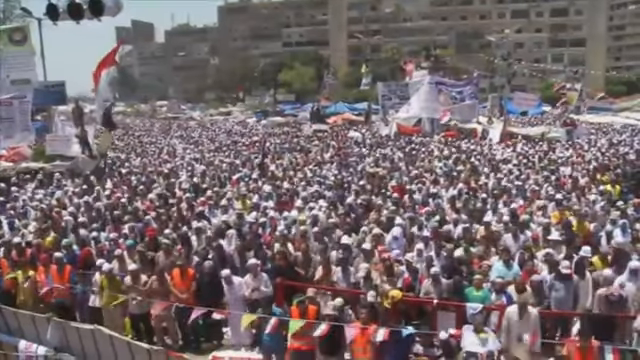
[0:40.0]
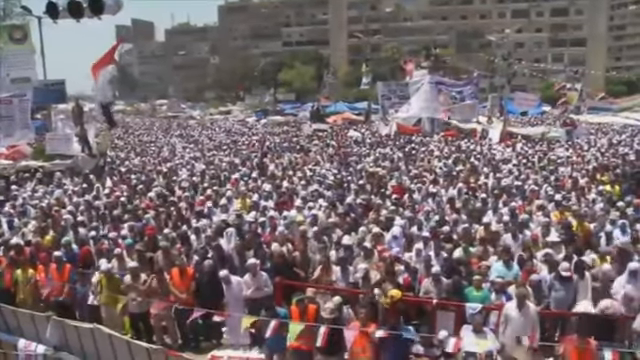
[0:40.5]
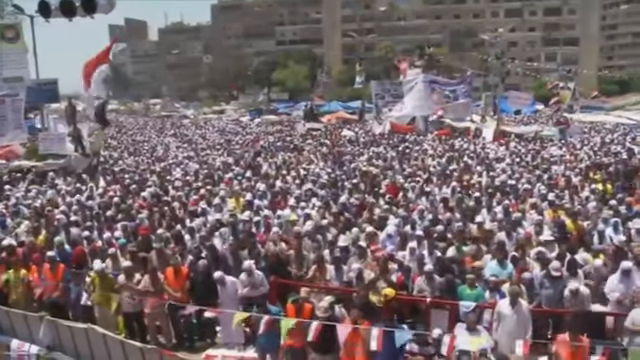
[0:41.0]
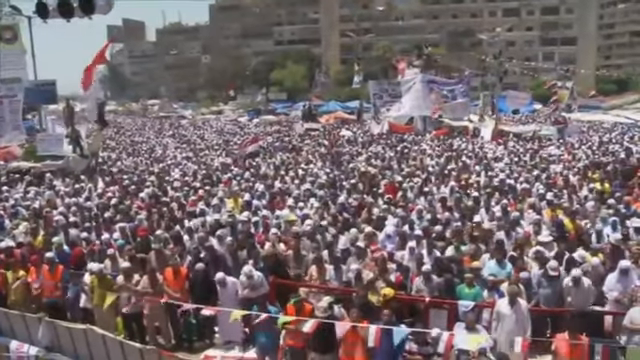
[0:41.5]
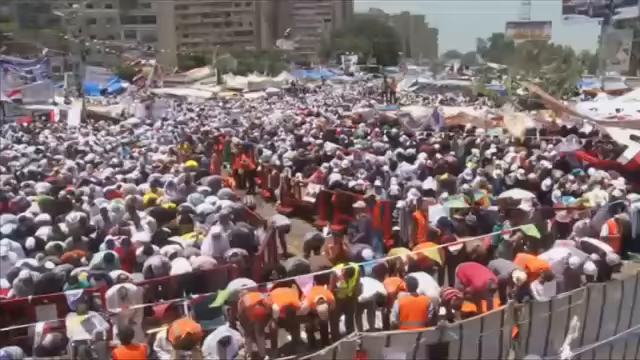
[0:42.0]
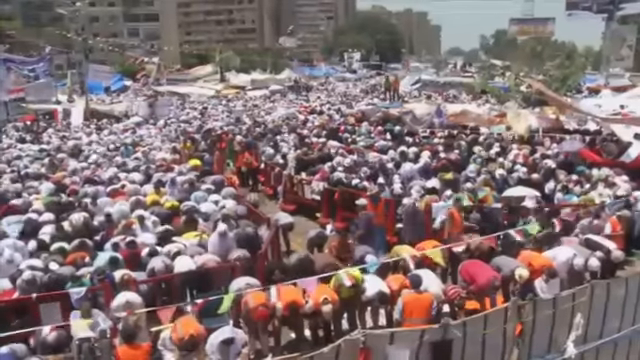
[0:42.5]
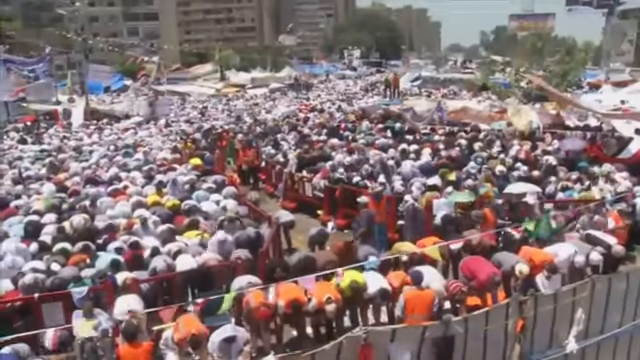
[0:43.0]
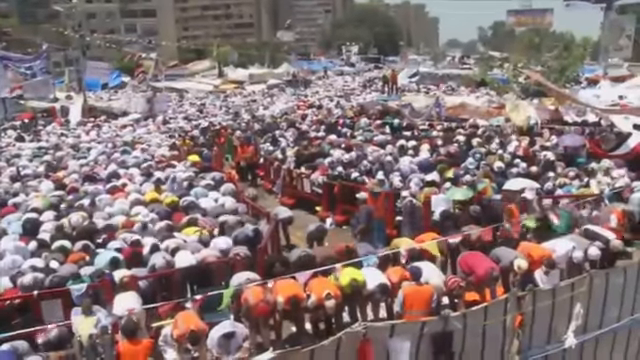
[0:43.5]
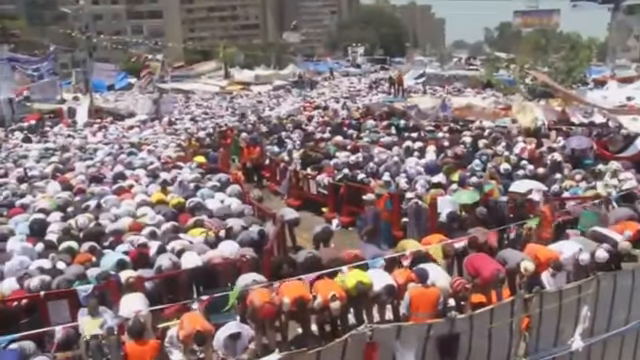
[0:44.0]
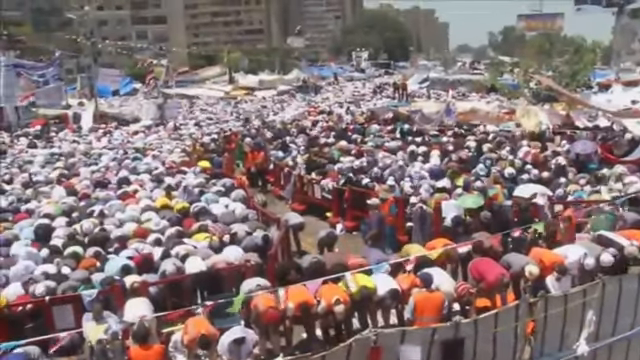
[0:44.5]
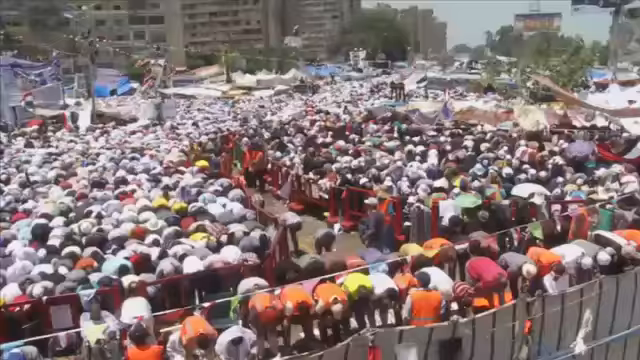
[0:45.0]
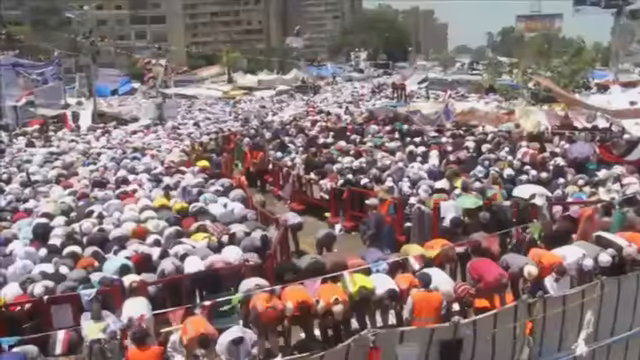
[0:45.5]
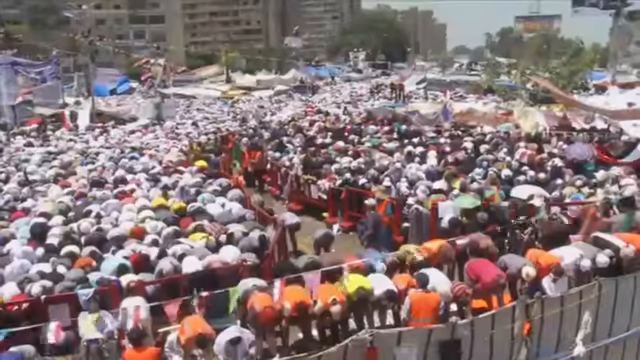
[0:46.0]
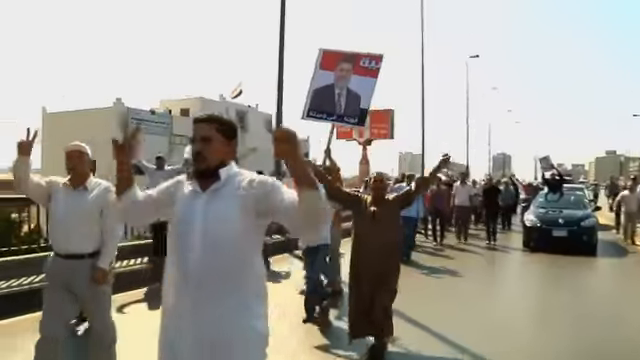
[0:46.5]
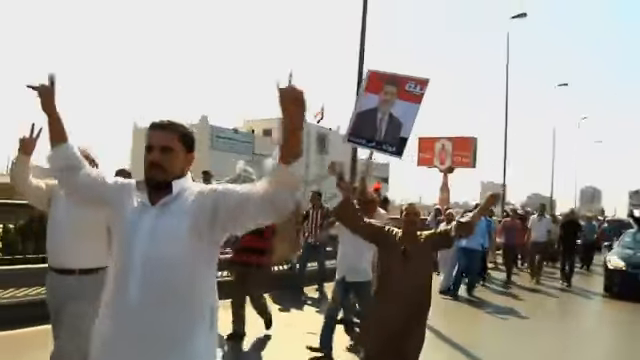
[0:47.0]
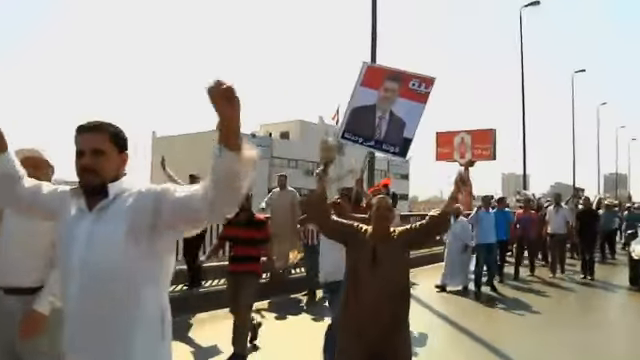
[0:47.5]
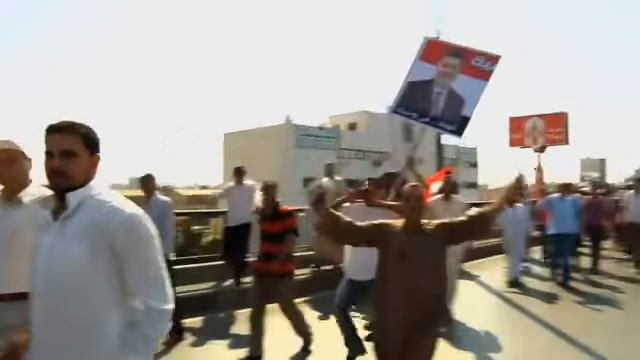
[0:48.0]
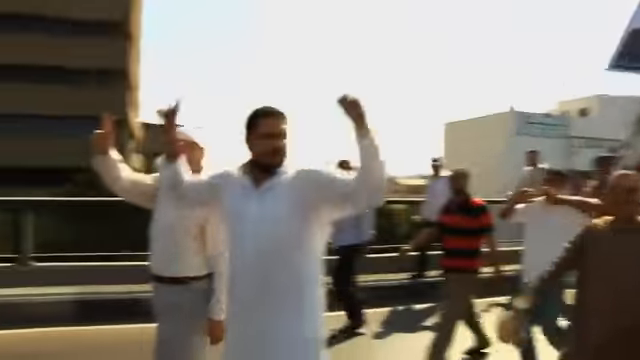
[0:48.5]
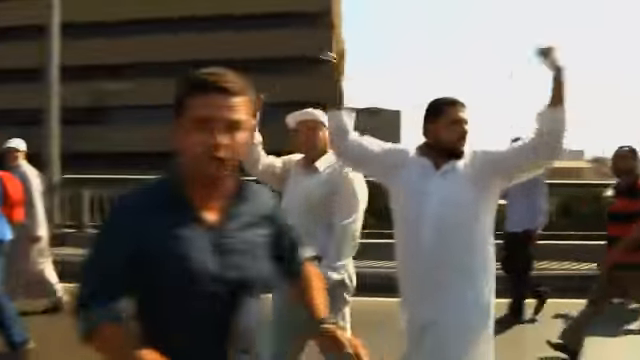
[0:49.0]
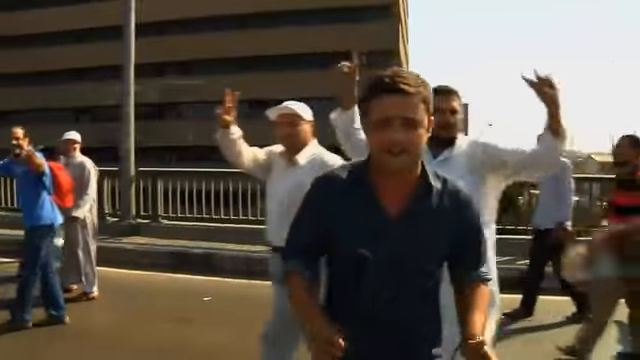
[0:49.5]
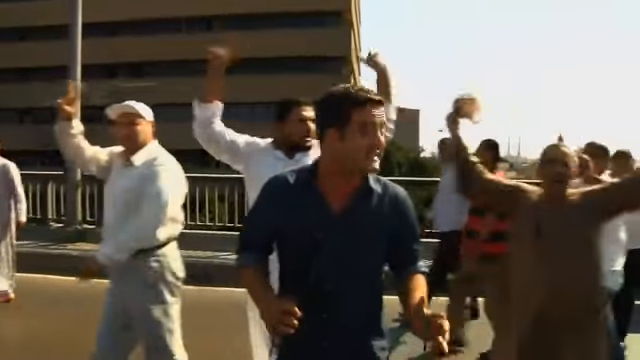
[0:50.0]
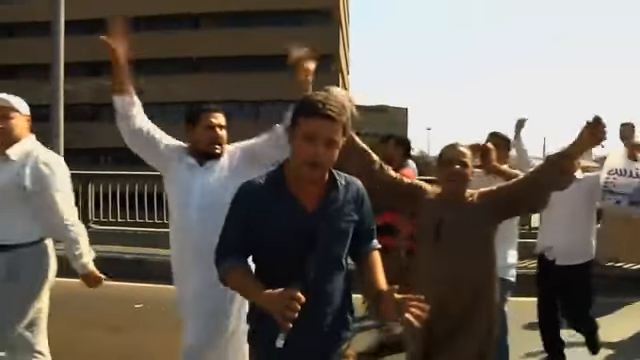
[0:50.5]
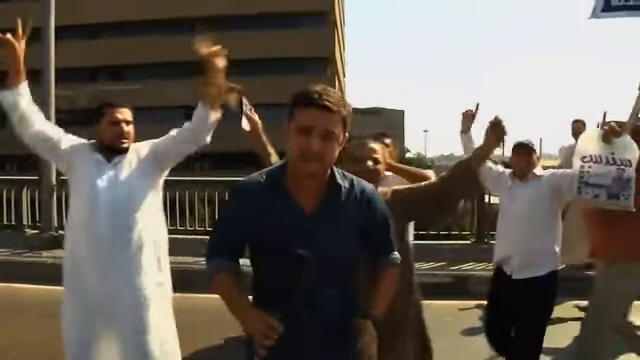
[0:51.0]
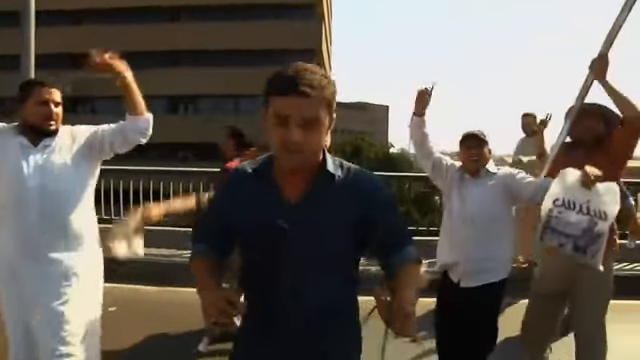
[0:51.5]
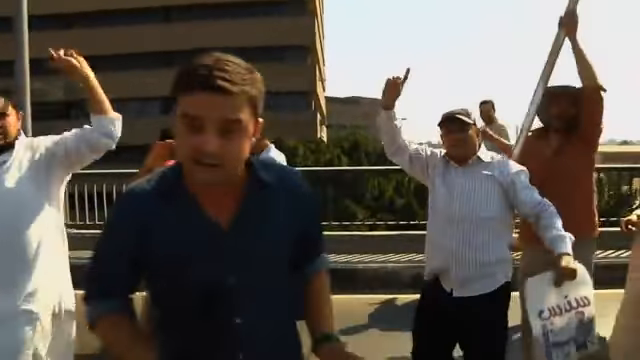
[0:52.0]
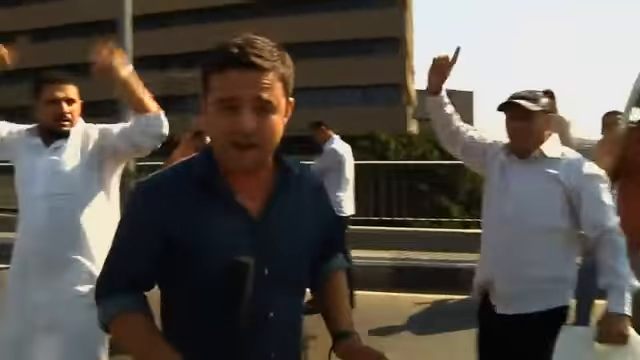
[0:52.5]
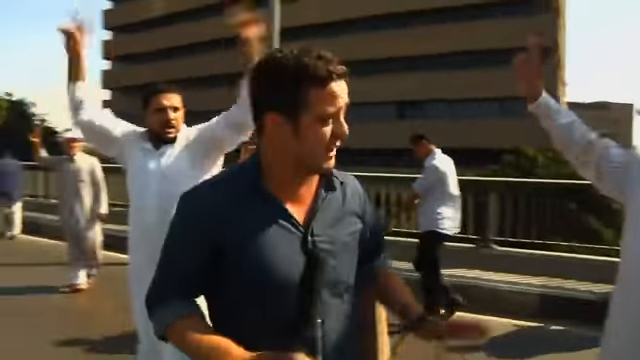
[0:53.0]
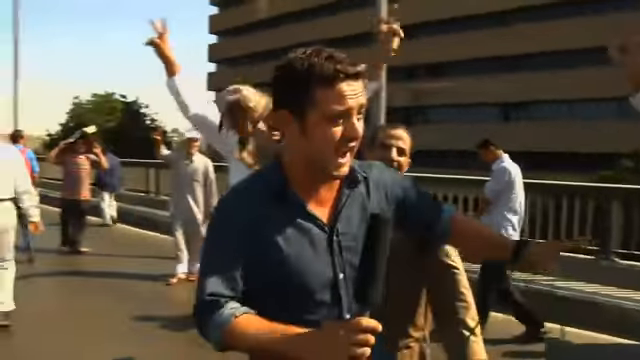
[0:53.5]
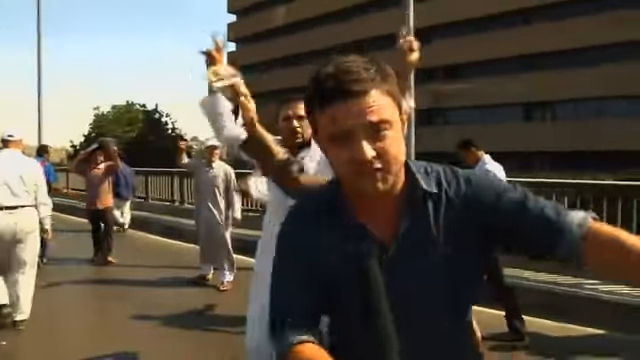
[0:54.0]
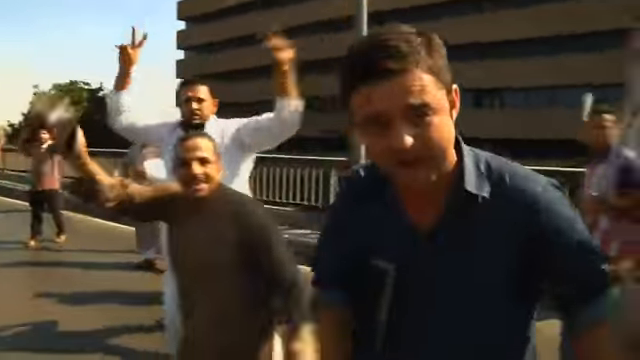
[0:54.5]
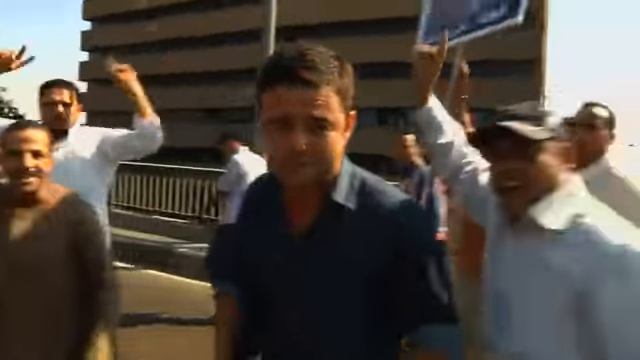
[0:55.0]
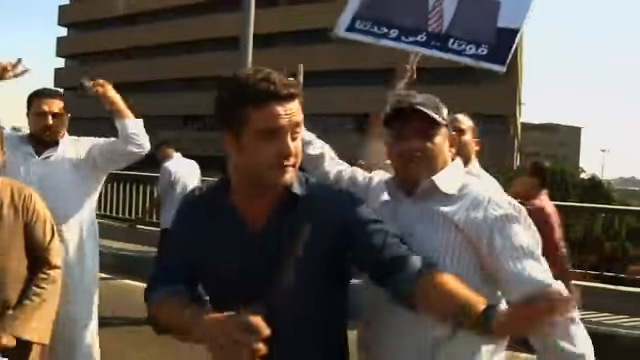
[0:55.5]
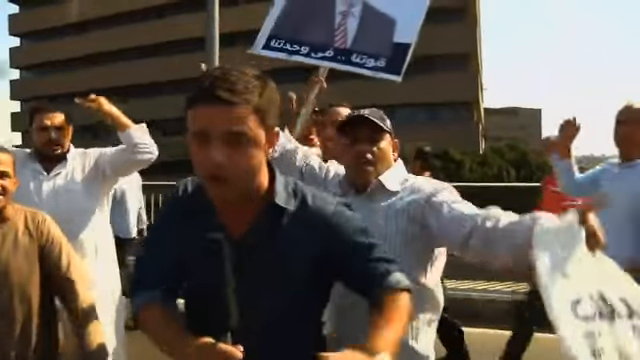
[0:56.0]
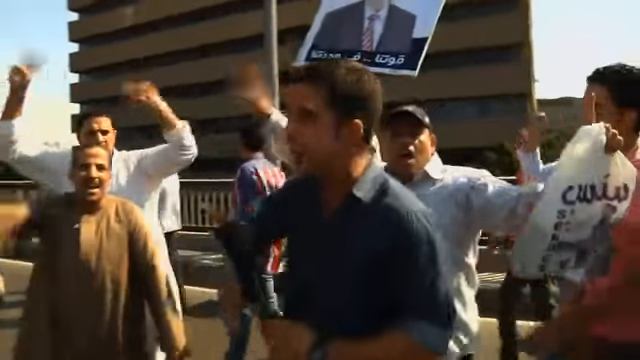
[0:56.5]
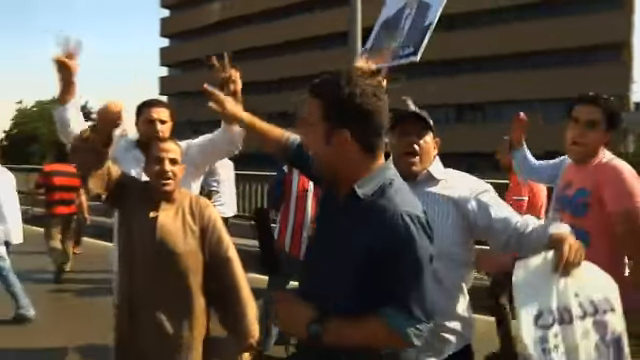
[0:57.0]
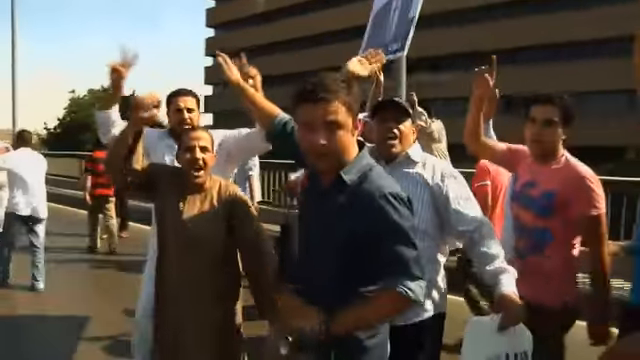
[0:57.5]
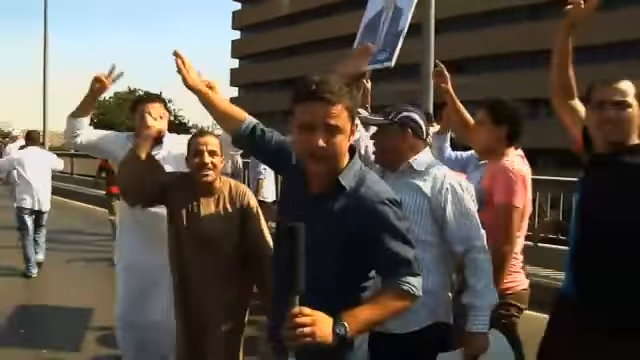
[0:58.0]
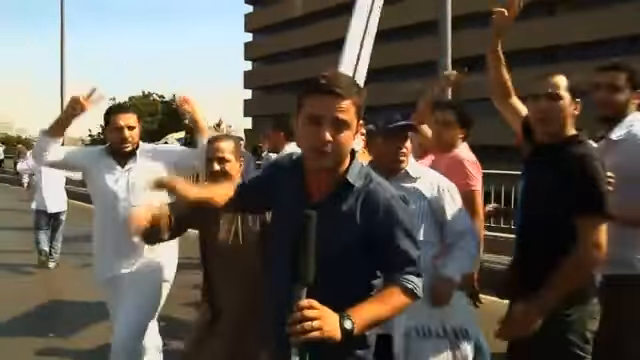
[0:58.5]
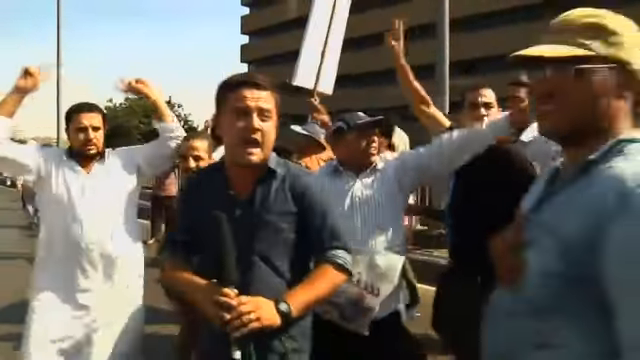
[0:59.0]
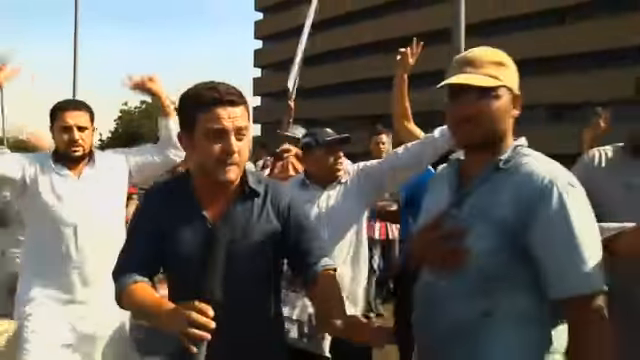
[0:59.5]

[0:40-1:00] The Muslim prayer continues in the street. Only men are visible so far, with no women seen. People on the streets of Egypt appear happy and hold postcards bearing a photo of a man.